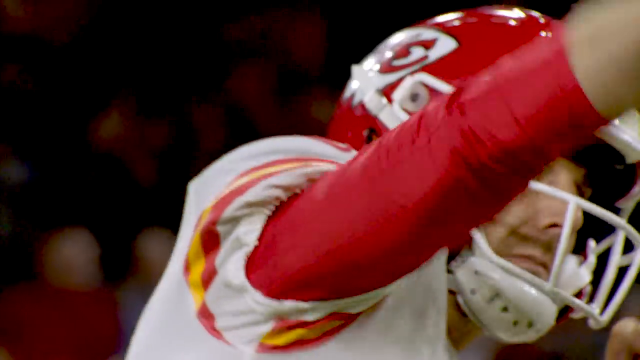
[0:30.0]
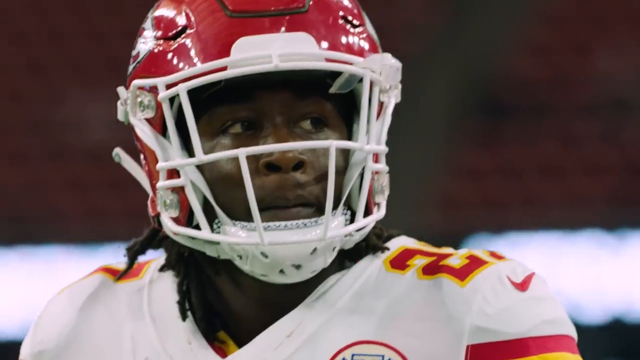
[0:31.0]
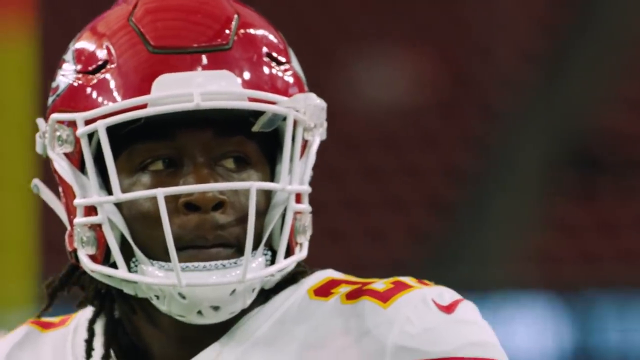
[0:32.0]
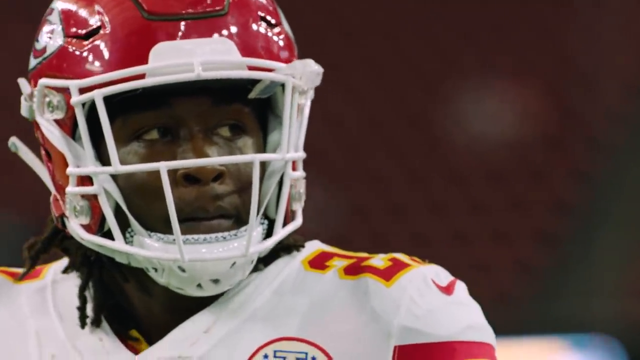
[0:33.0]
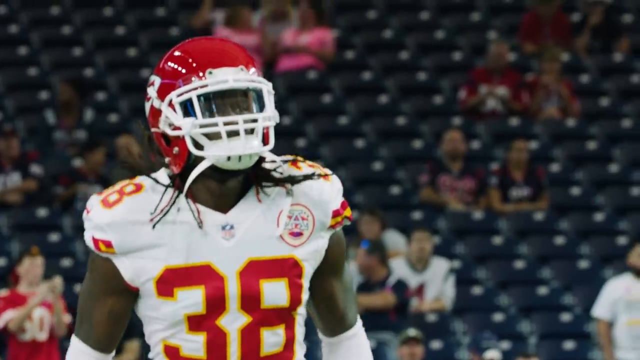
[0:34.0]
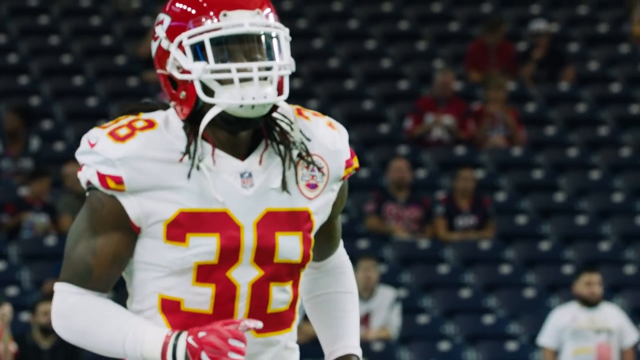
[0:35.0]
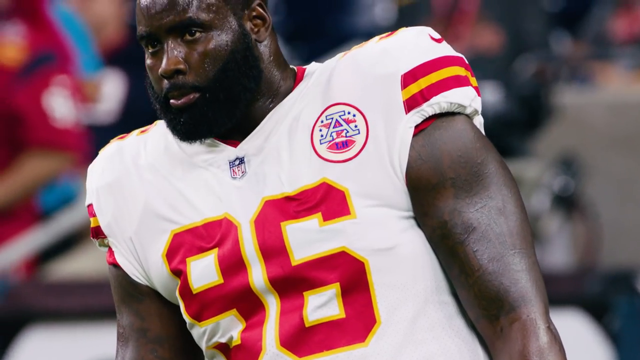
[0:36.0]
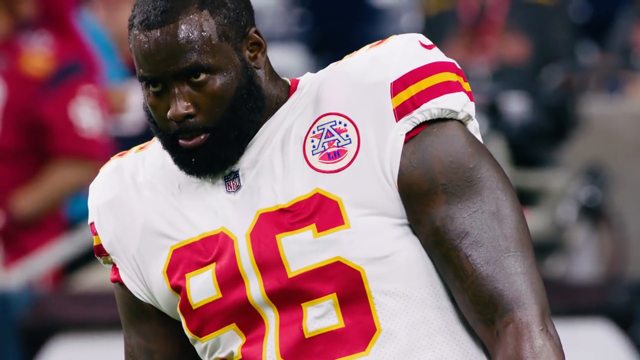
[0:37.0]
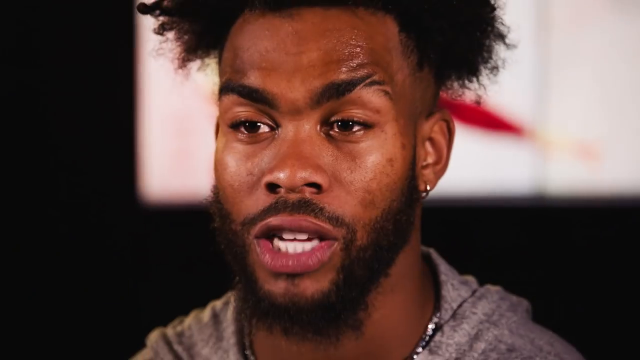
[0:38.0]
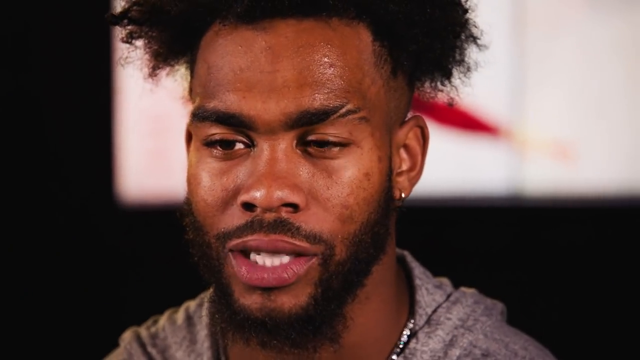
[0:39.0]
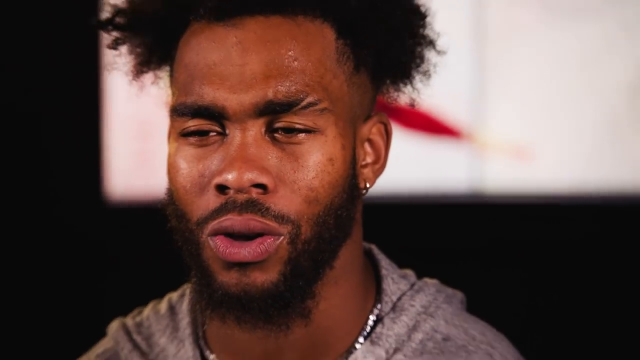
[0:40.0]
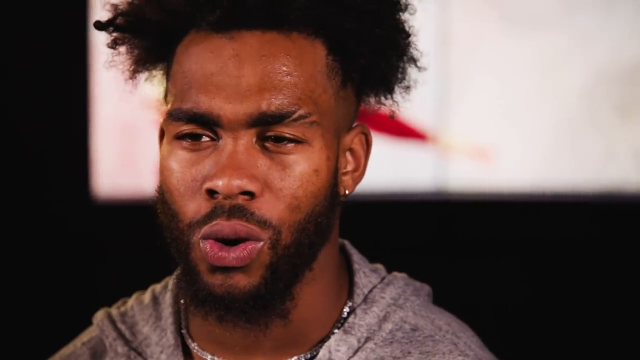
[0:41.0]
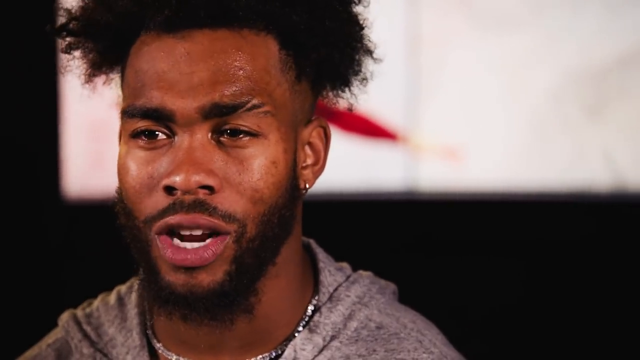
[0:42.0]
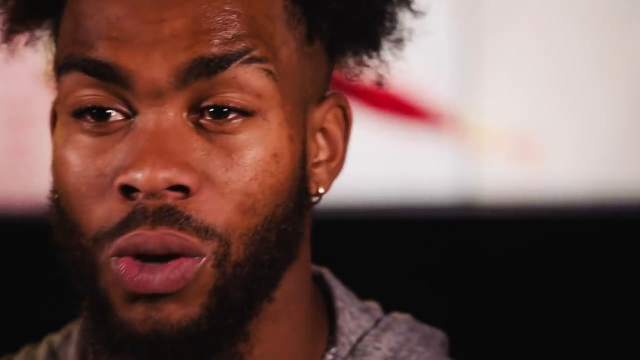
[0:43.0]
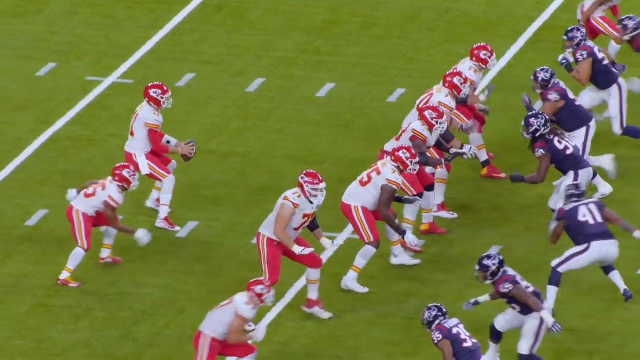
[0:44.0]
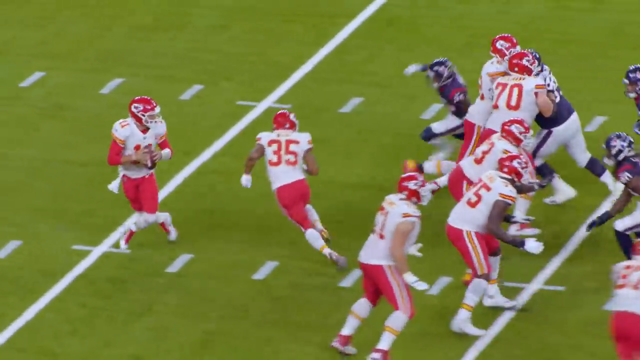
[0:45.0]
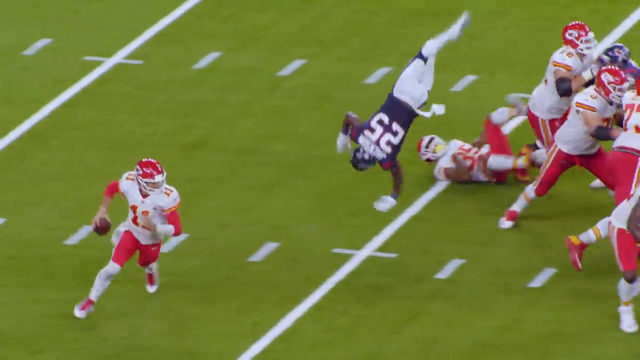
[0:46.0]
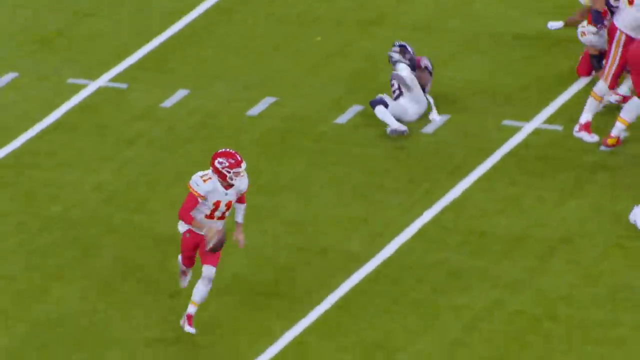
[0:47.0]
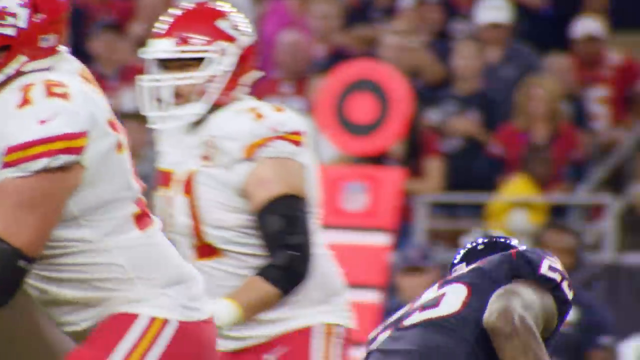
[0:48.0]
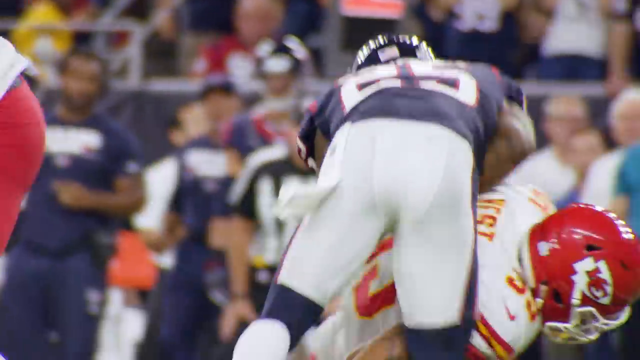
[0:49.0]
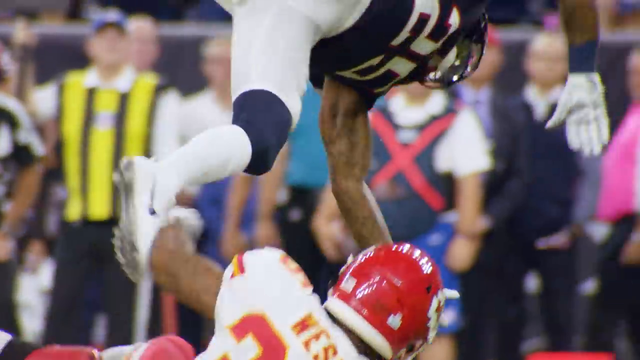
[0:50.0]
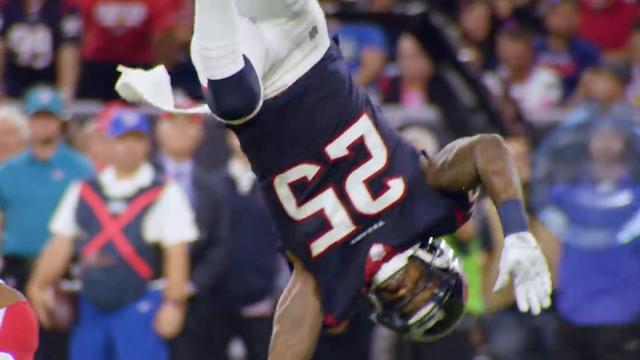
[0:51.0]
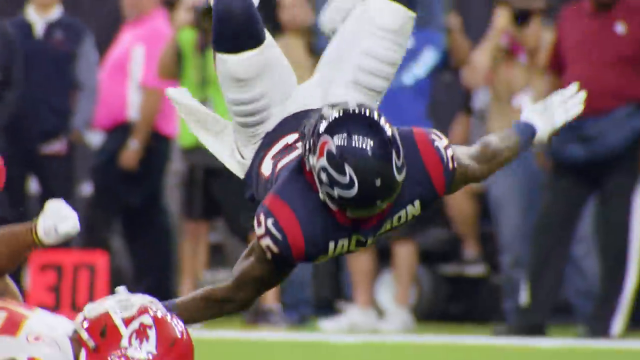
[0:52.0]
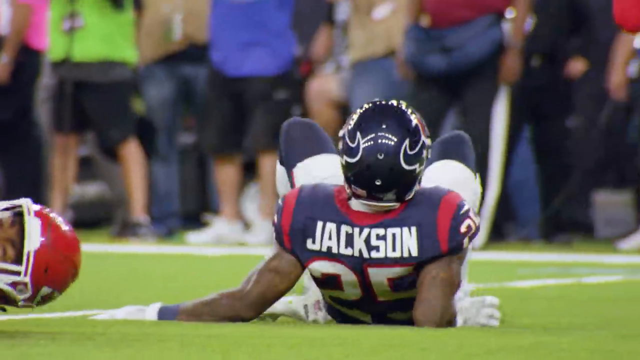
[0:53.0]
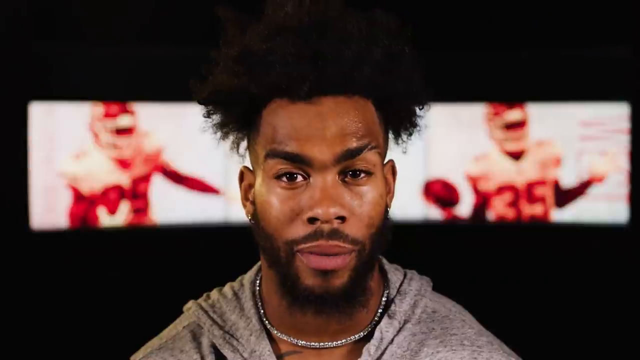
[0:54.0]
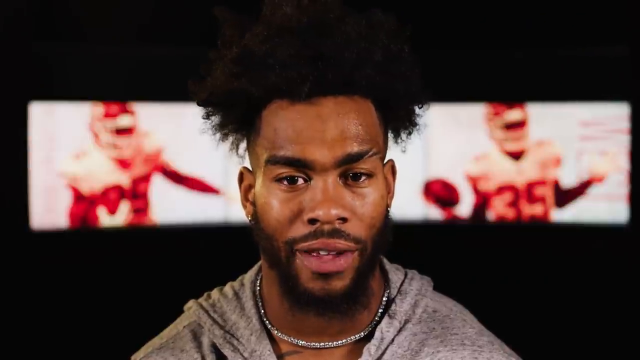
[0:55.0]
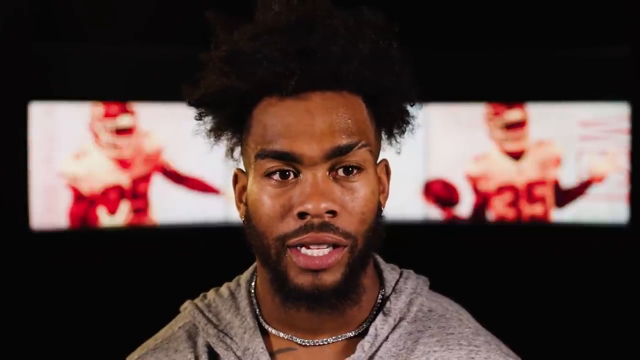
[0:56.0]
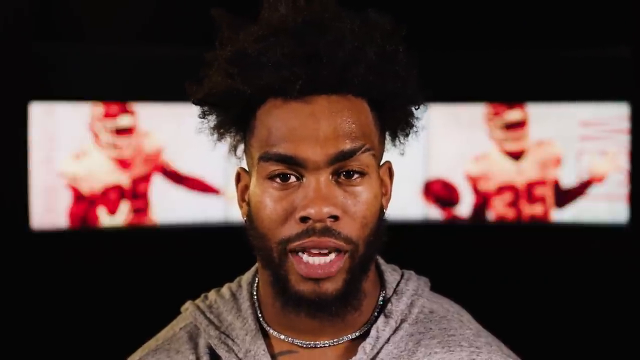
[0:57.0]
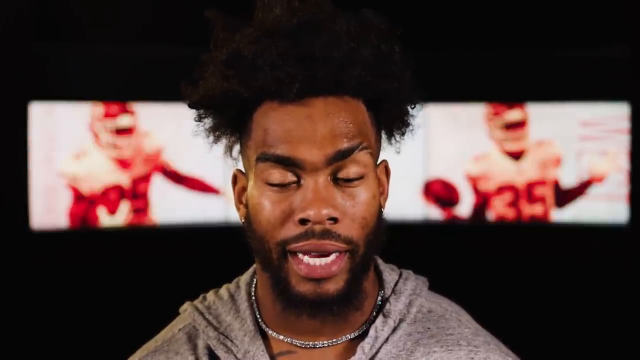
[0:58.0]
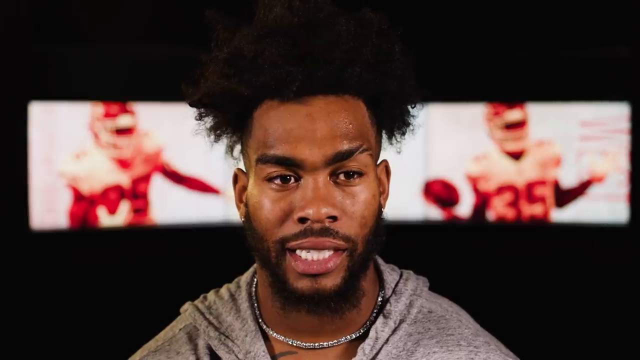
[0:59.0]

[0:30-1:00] As the individual throws the football, the logo on his helmet appears to be that of the Kansas City Chiefs. A headshot follows of another individual, a black man whose helmet has a red base with a white grill covering his face; he wears a white shirt, possibly number 38, and the video cuts to the individual wearing number 38 running towards the camera. Another muscular black man wears a white shirt with apparently the number 96 on the front. The video returns to the headshot of the individual who was speaking earlier, then moves to an action shot of a football game that appears to be separate from the previous one. White-shirted players are on offense as a defensive player attacks the quarterback, and an individual moves to get between them. A line of white-shirted individuals blocks as the quarterback runs around and to his right. A defensive player in blue with the name Jackson on his back tries to get to the quarterback but is thwarted by one of the quarterback's defensive players and ends up in a somersault. The video goes back to the original speaker, his face centred in the image, with a bar at his left and right showing two separate football players. He speaks quite quickly and appears to be relating a story.